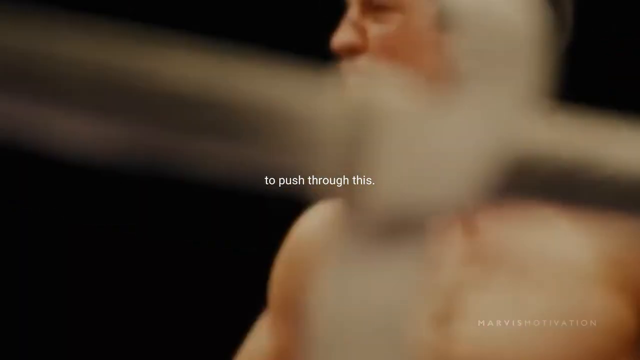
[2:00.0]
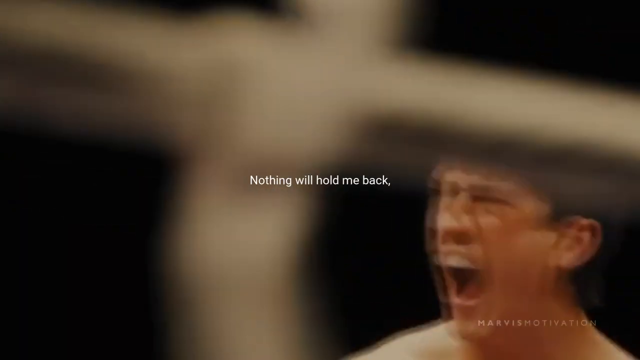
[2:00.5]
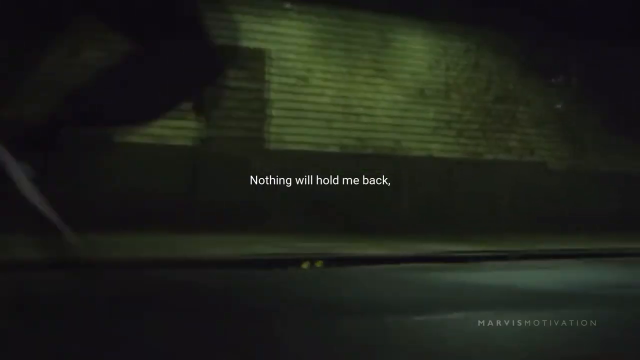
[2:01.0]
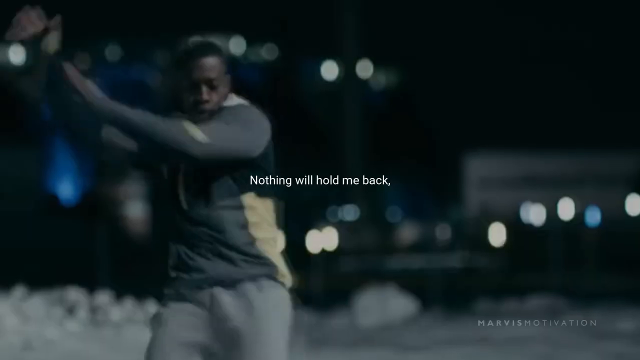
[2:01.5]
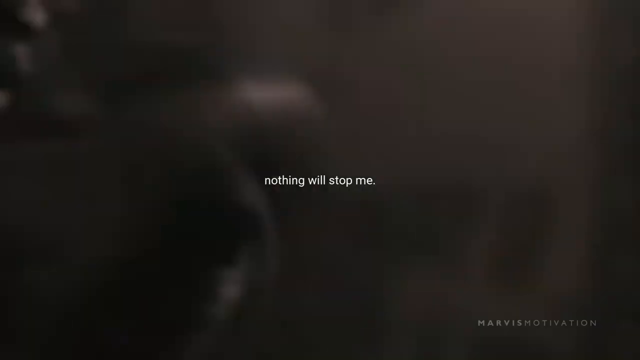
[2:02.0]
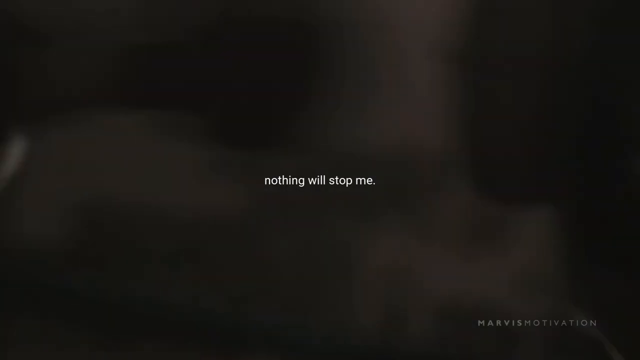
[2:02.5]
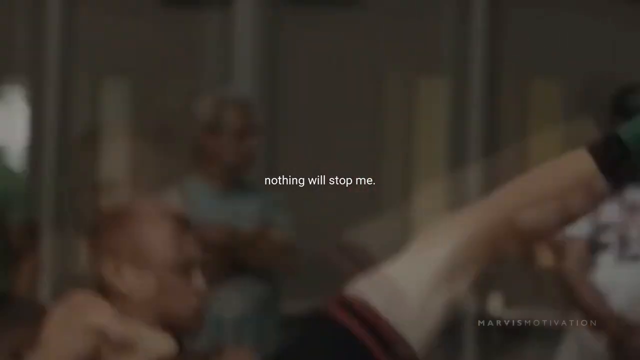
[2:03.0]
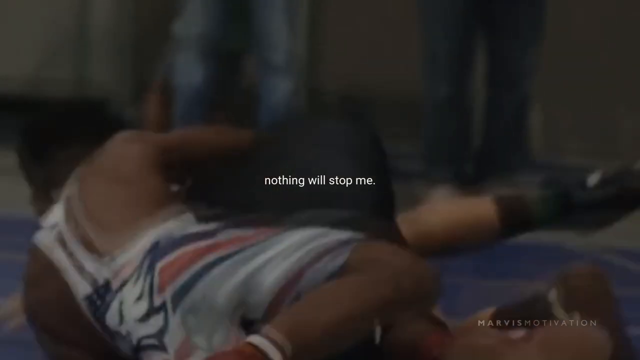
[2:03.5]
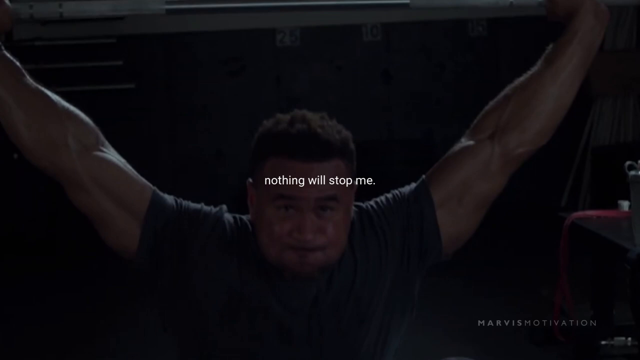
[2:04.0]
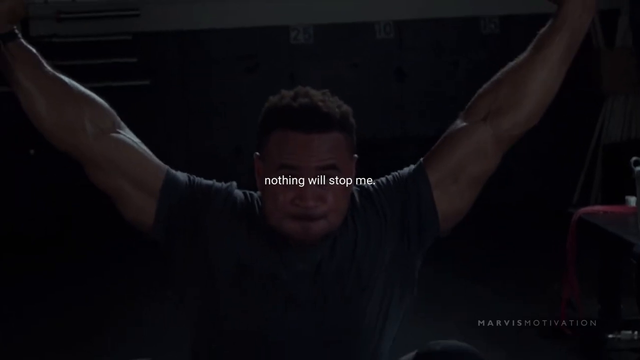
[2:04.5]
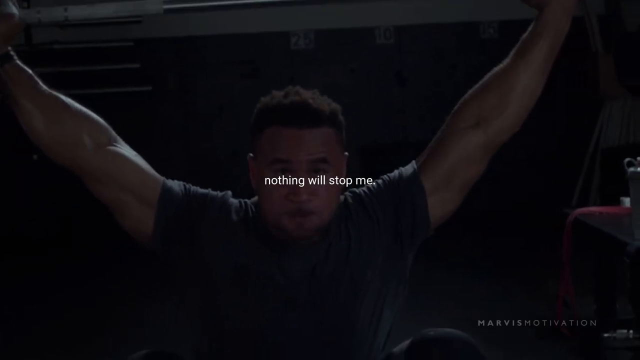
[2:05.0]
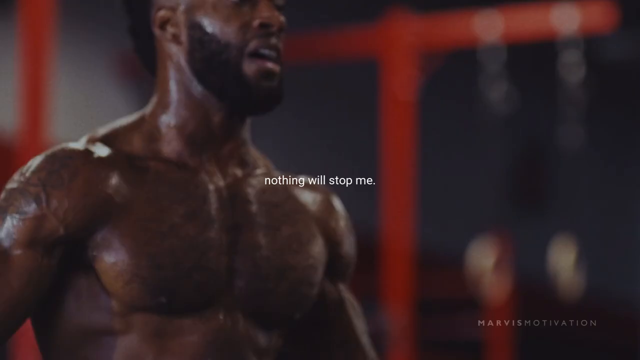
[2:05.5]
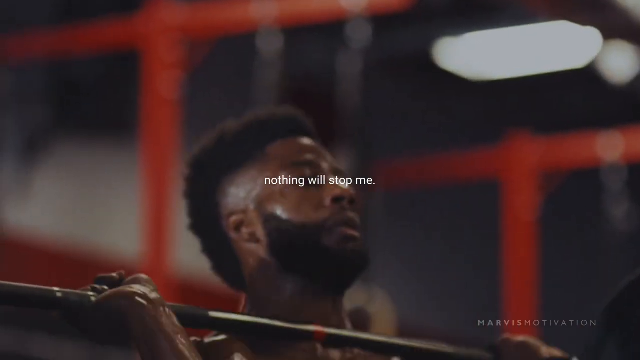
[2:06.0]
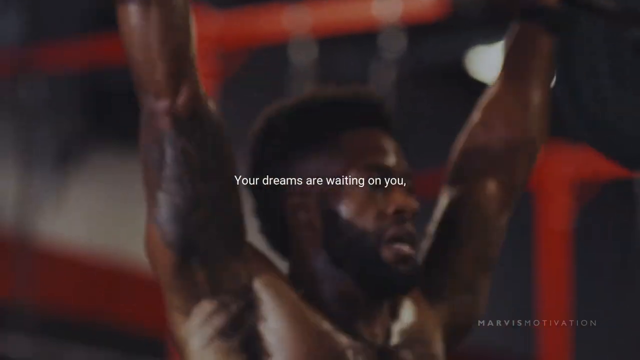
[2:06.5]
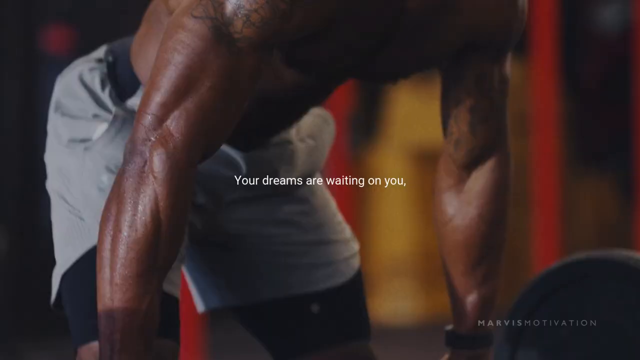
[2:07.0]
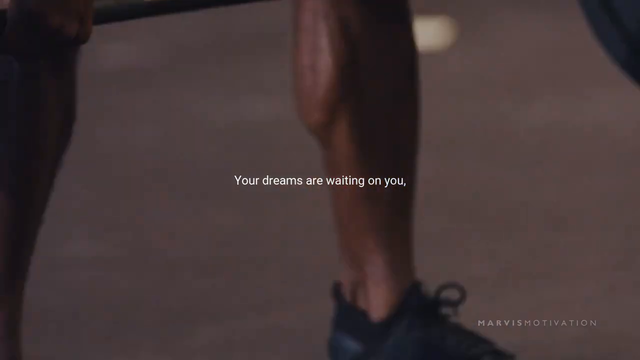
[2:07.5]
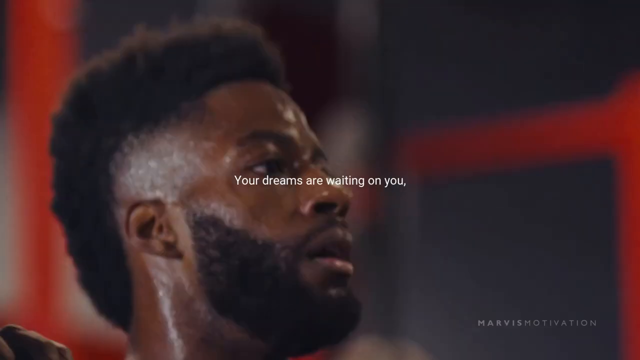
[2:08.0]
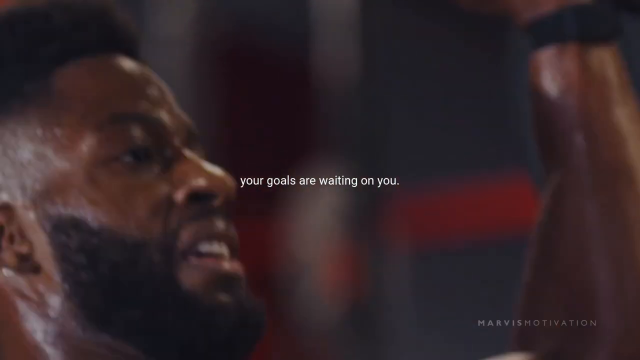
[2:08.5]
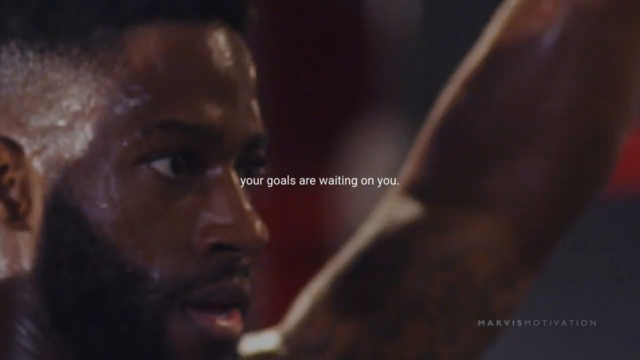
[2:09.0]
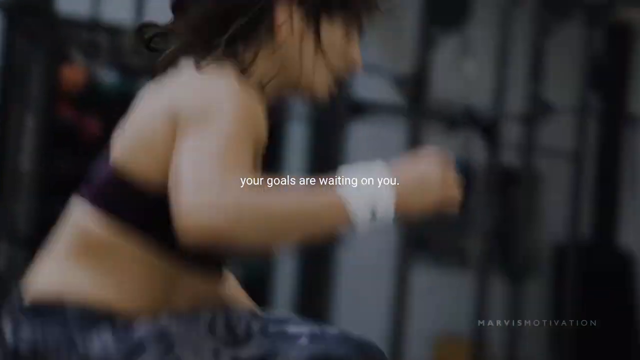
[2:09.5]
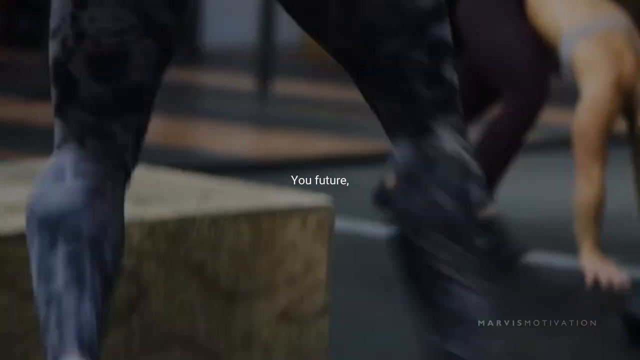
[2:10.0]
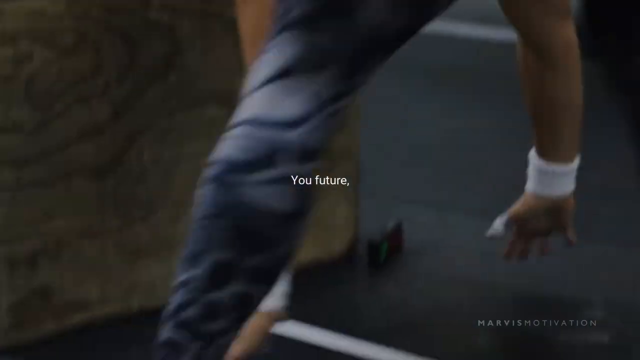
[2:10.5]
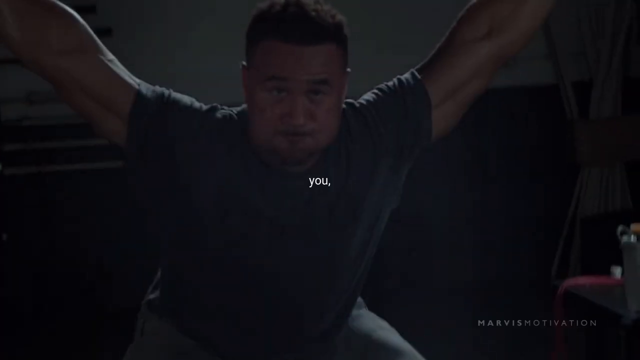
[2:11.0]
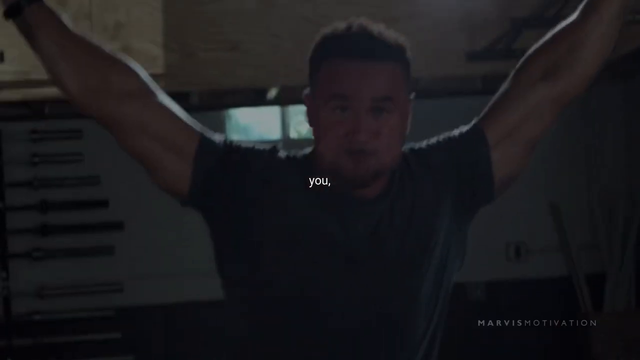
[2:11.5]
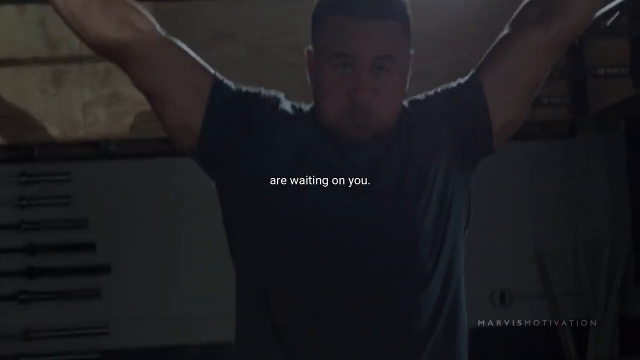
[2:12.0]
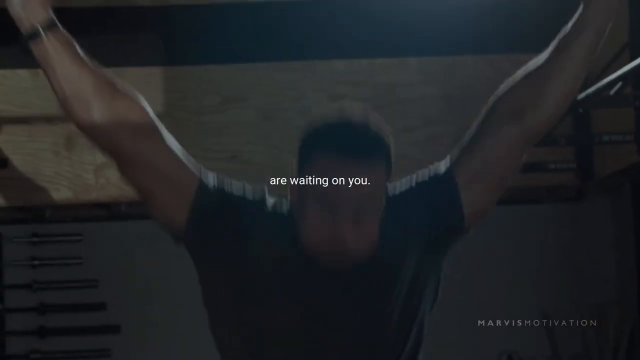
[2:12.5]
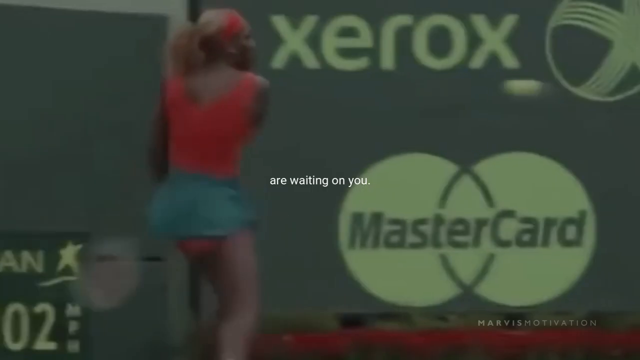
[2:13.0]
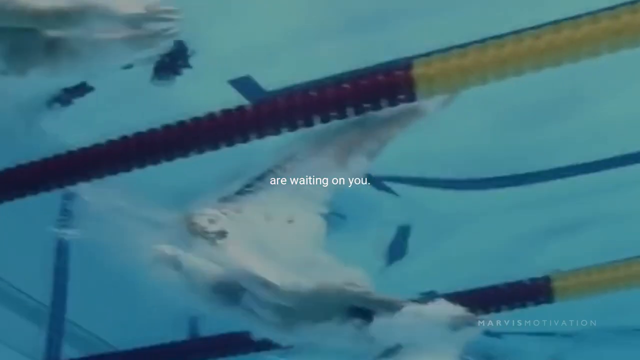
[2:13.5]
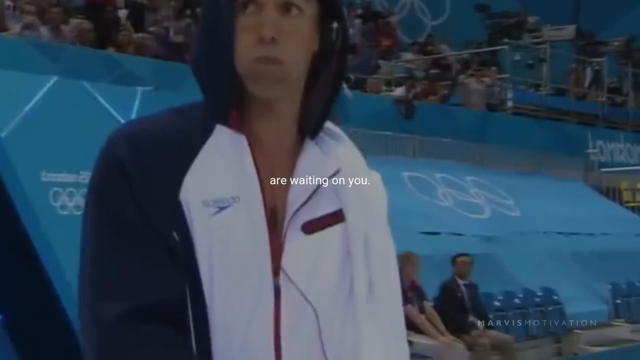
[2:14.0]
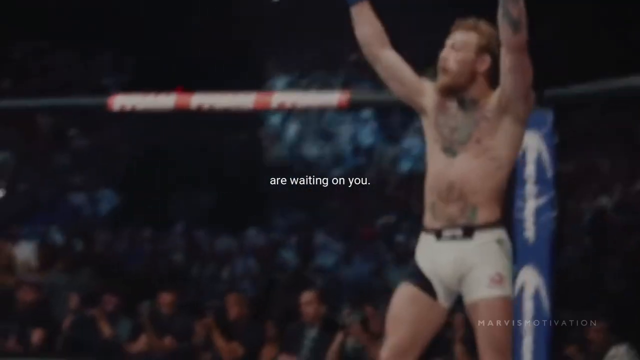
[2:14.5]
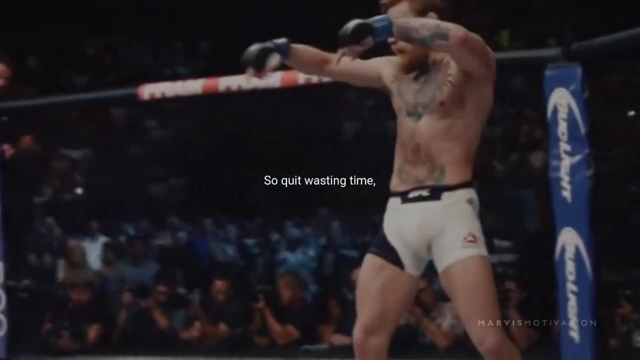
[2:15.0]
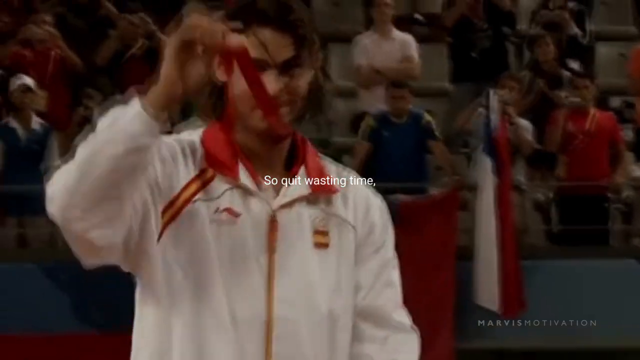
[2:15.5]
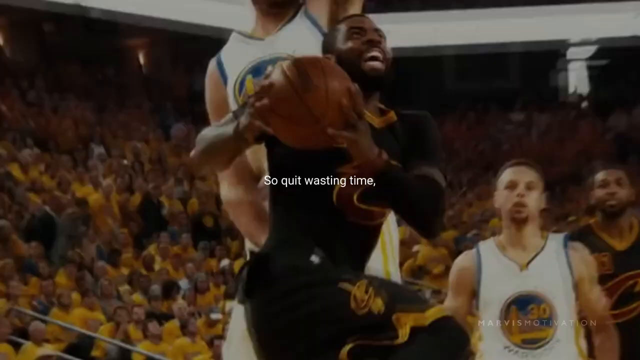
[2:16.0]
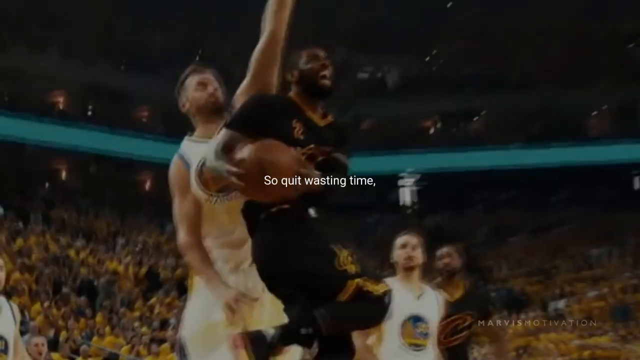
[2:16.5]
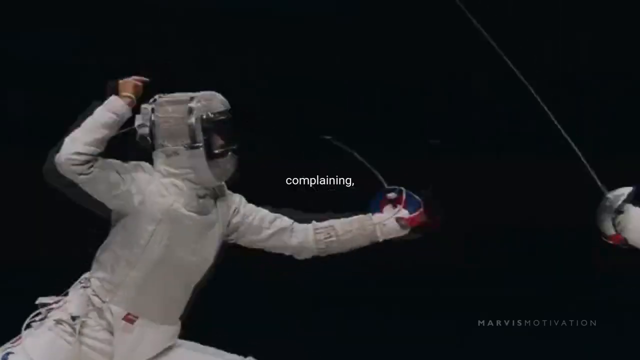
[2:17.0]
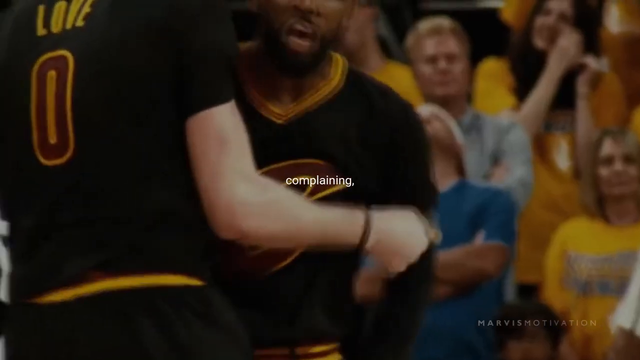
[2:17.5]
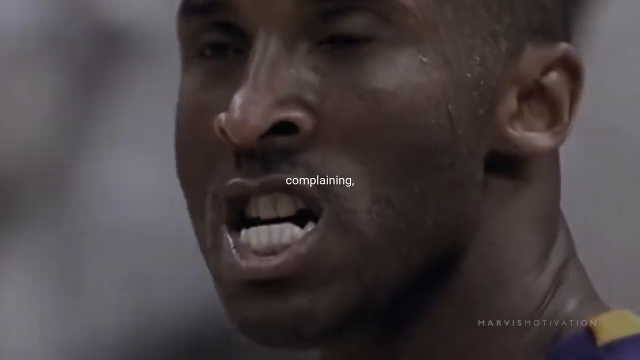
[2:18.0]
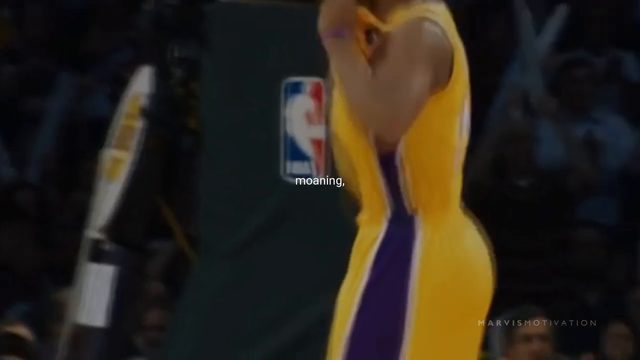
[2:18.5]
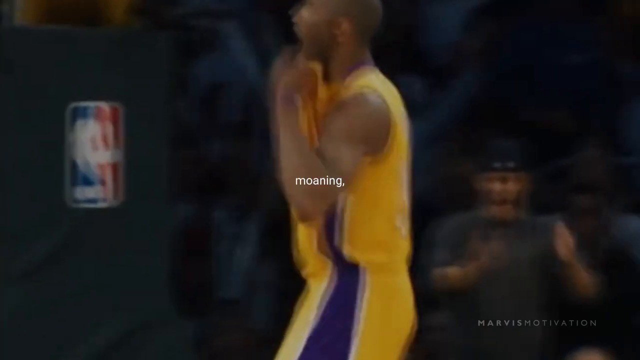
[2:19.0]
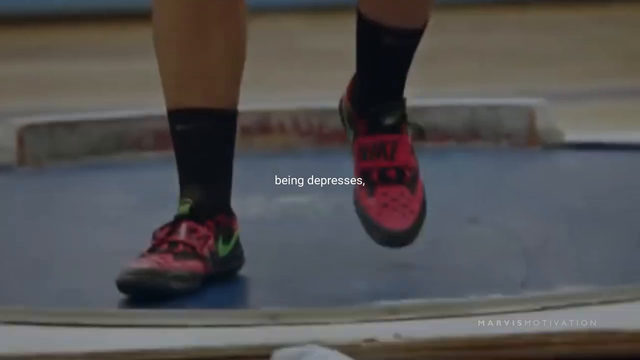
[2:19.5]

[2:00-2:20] A male subject screams with white text still on the screen. The video transitions to a black individual and white text reading "nothing will hold me back, nothing will stop me," then to multiple subjects in various physical settings: lifting very heavy weights in the gym, boxing, running track, lifting weights, and an African American lifting a sort of deadlift weight. Text reads "your dreams are waiting on you" and then "your goals are waiting on you," followed by females in a sort of wooden block and a male lifting weight. Text reads "you are waiting on you," then Serena Williams appears on a tennis court playing a sort of tennis match. White text then reads "are waiting on you, so quit wasting time, complaining, moaning, being depressed."